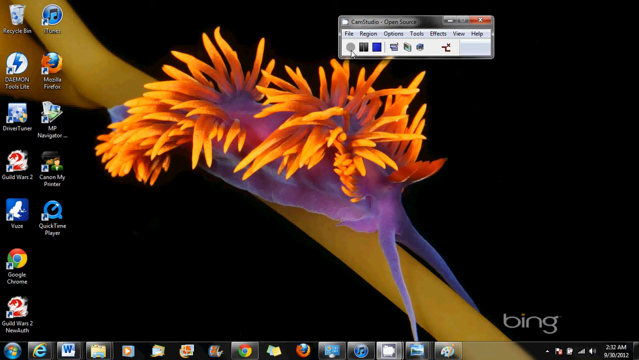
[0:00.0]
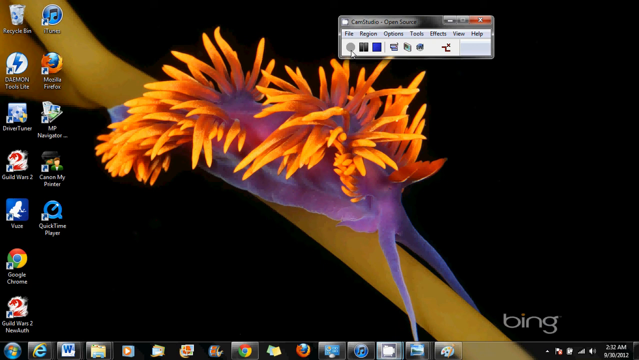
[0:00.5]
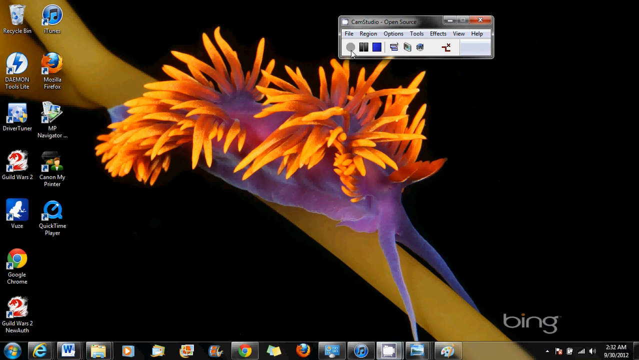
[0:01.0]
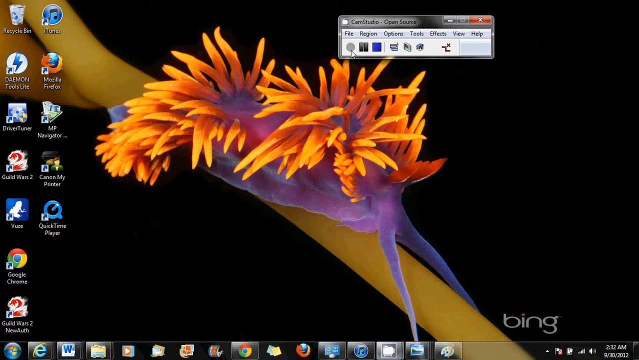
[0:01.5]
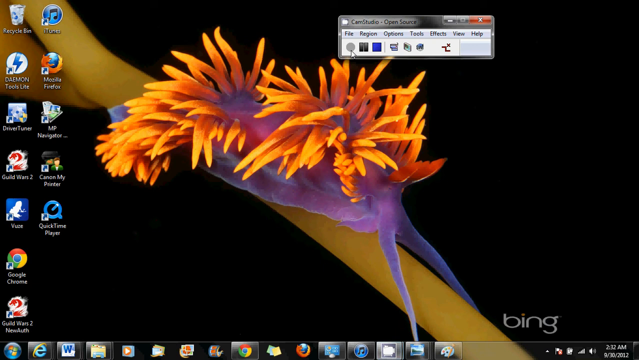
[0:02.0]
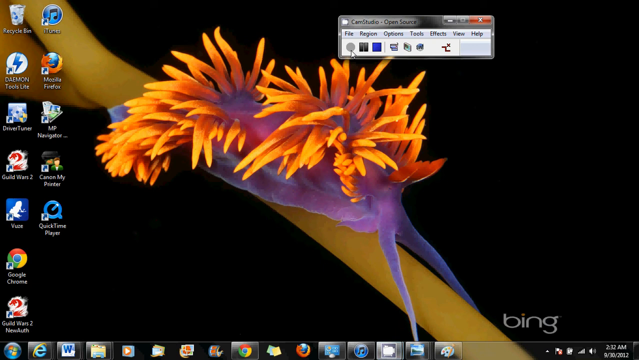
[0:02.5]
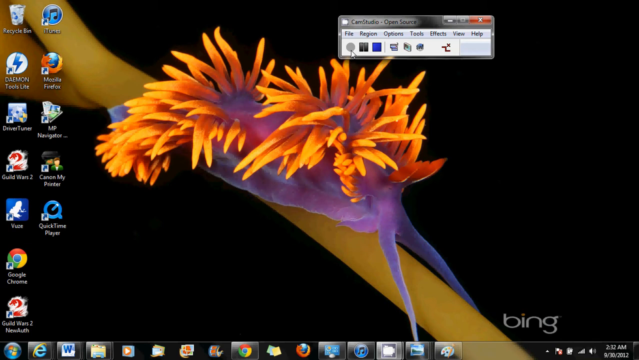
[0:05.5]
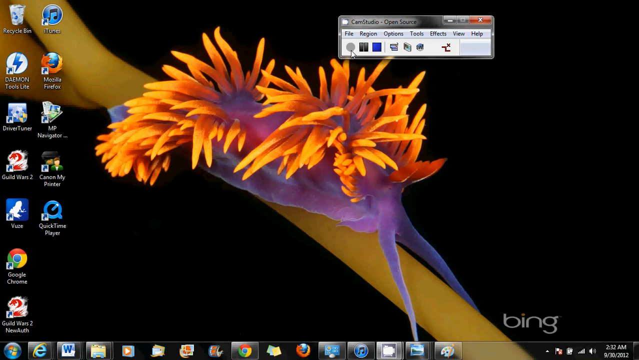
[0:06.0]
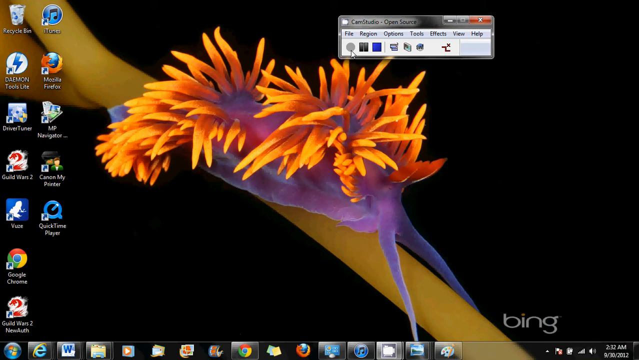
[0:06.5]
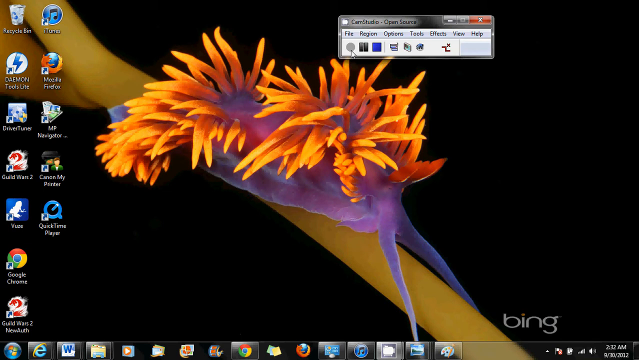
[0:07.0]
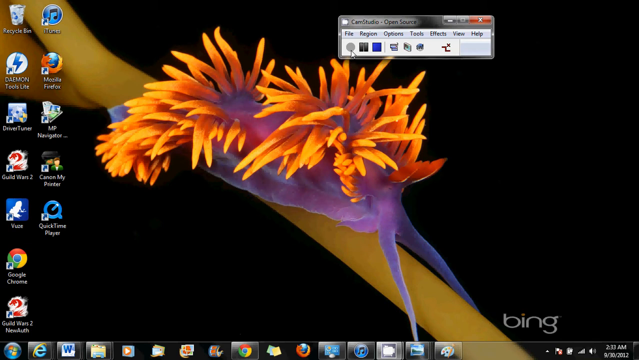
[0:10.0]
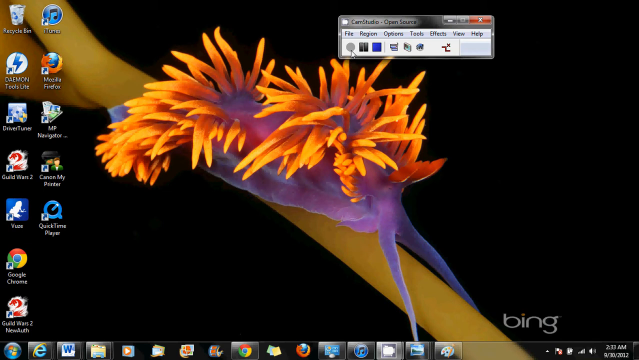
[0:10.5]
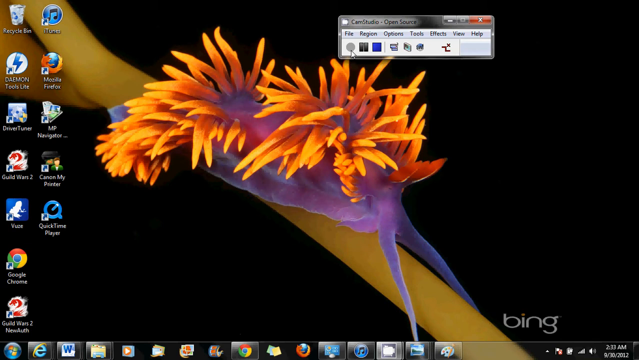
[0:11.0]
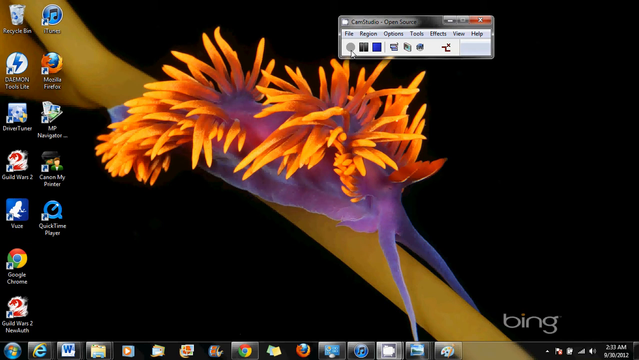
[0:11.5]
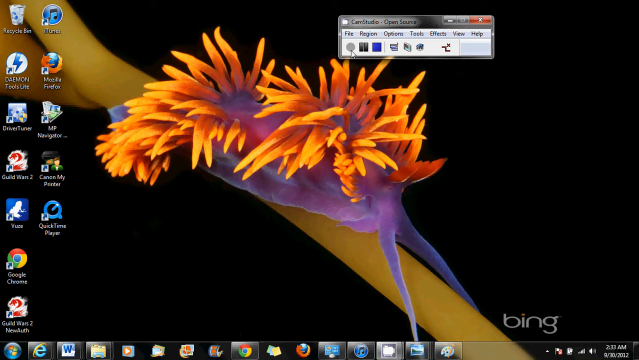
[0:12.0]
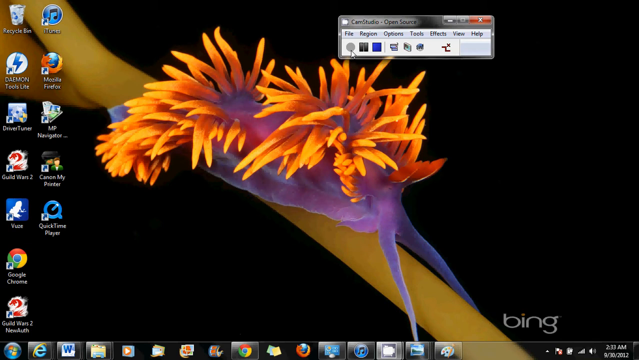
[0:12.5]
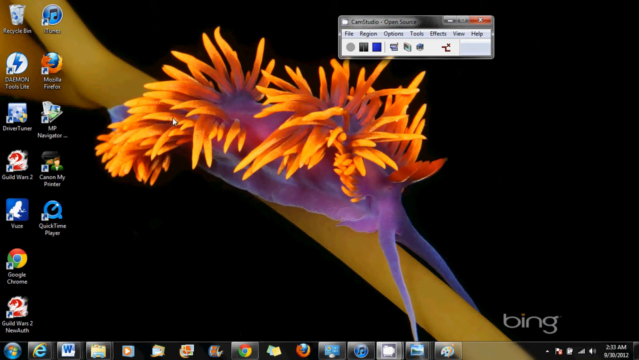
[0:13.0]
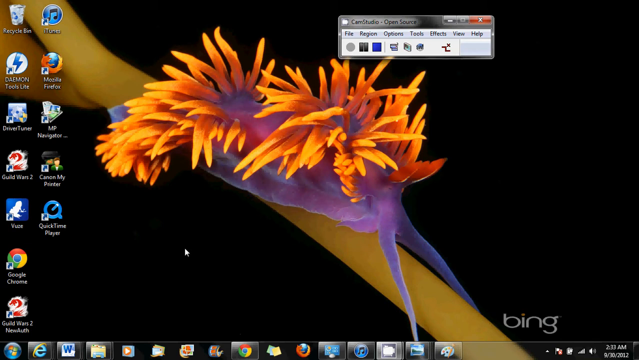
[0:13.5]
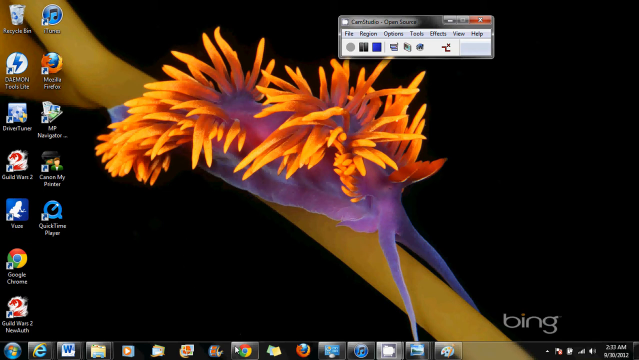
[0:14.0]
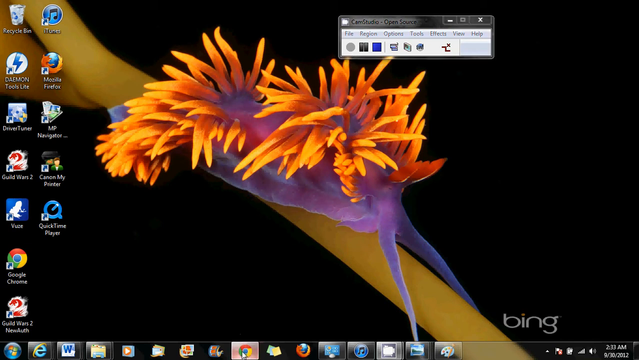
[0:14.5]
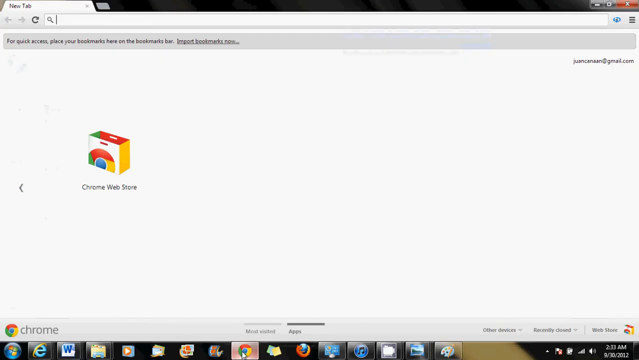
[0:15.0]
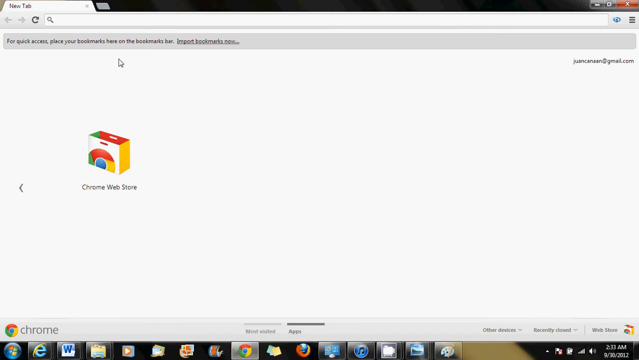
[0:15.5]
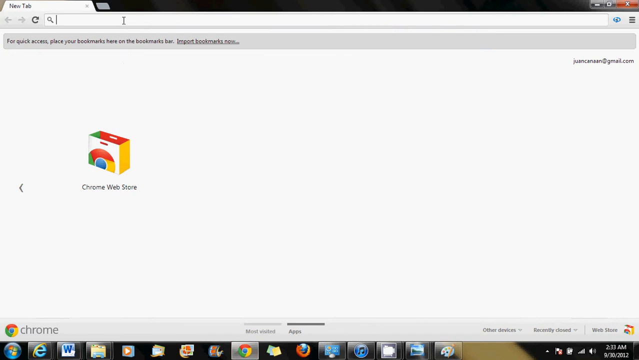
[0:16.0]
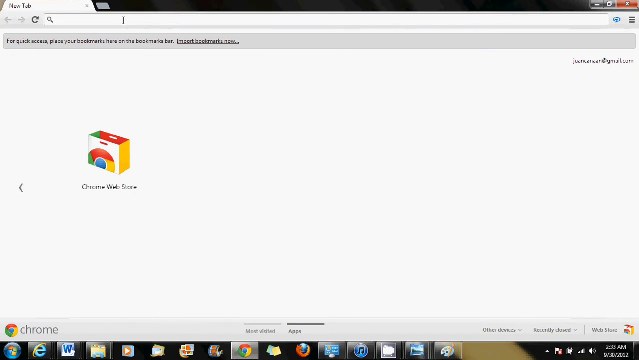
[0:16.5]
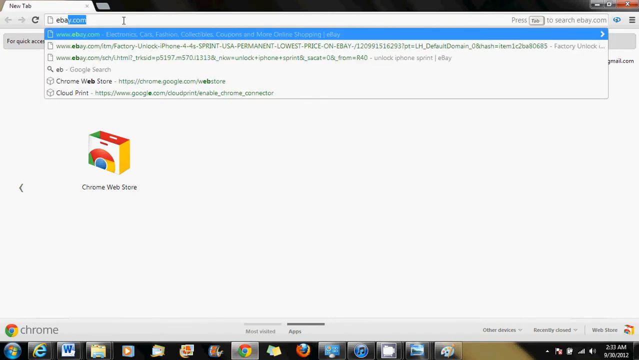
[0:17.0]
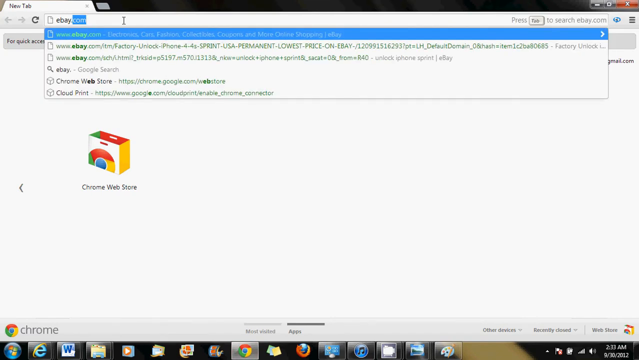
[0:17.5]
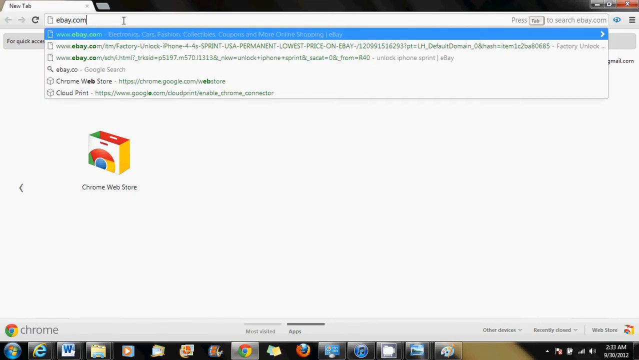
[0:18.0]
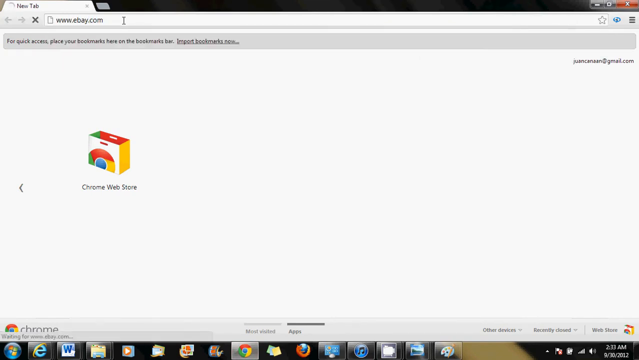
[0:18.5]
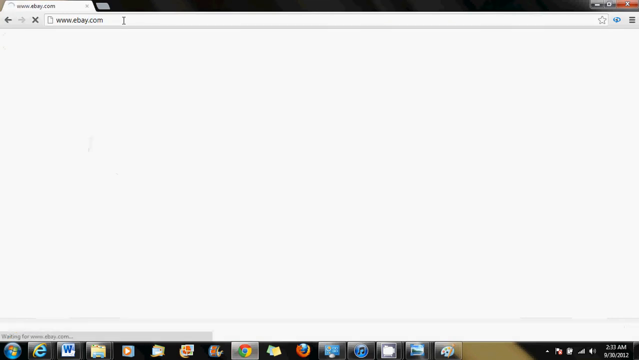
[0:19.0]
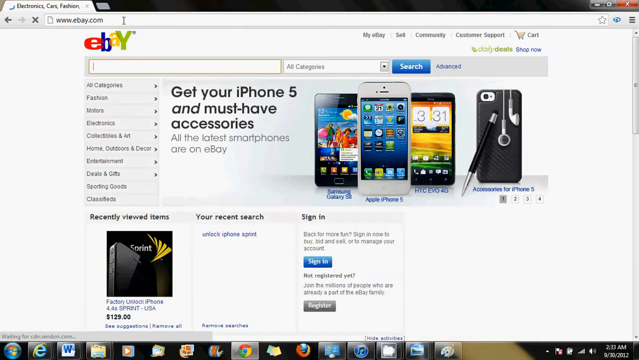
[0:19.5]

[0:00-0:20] The person's laptop screen shows their home screen with a small window open that reads "cam studio open source." The wallpaper is black except for what looks to be some sort of flower: a yellow stem runs diagonally from the top left to the bottom right, bright orange pointy petals come out from it, and the flower buds where the petals stem from are a purplish pink color. A watermark in the bottom right reads "bing." Several app icons, such as Google Chrome and Firefox, are on the left side of the screen. The person opens Google Chrome and types in "ebay.com."